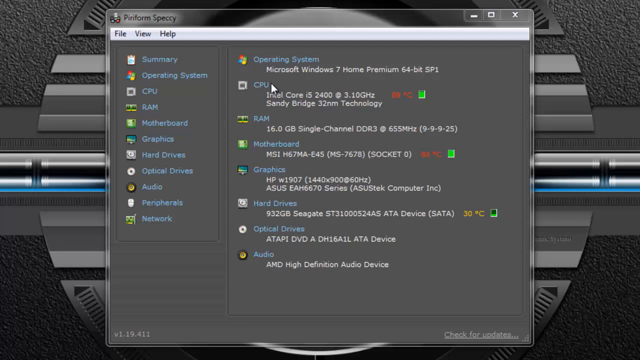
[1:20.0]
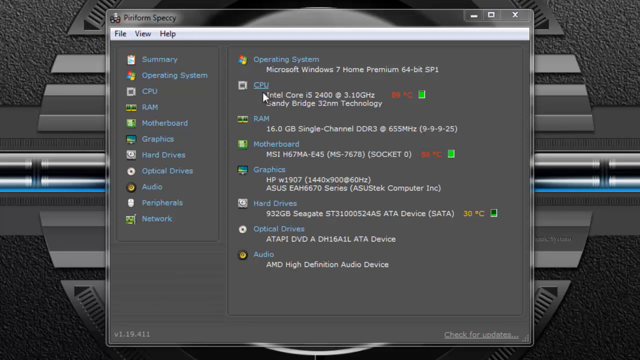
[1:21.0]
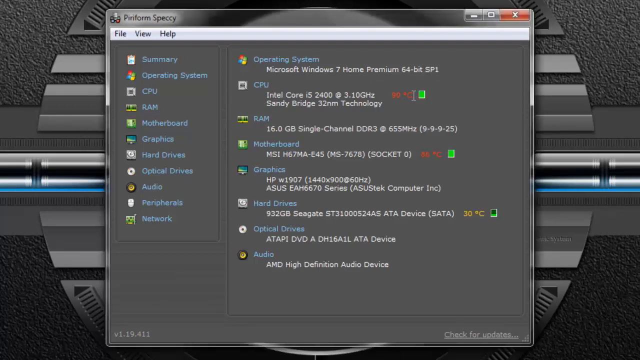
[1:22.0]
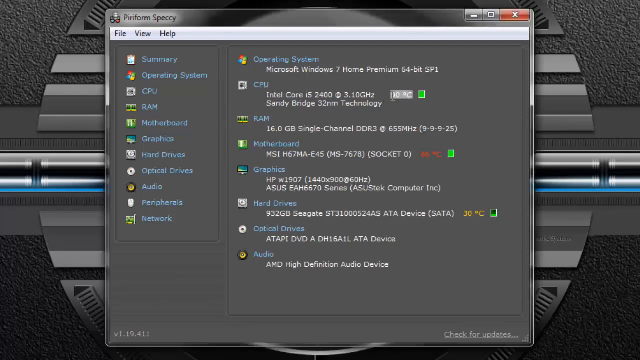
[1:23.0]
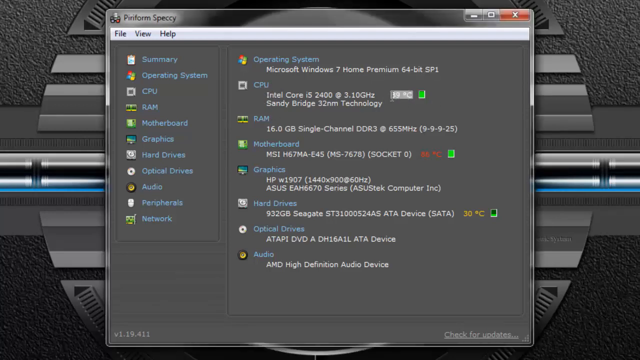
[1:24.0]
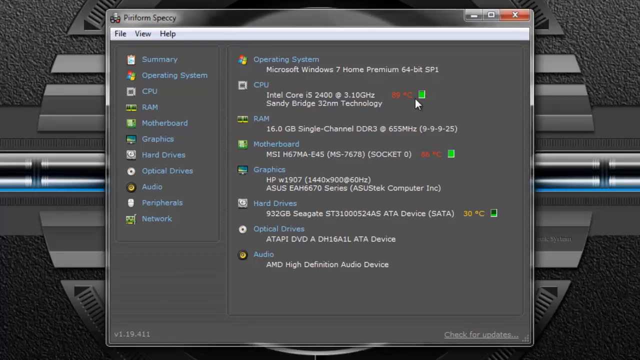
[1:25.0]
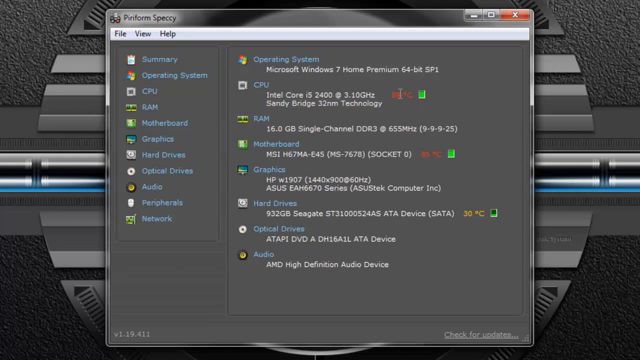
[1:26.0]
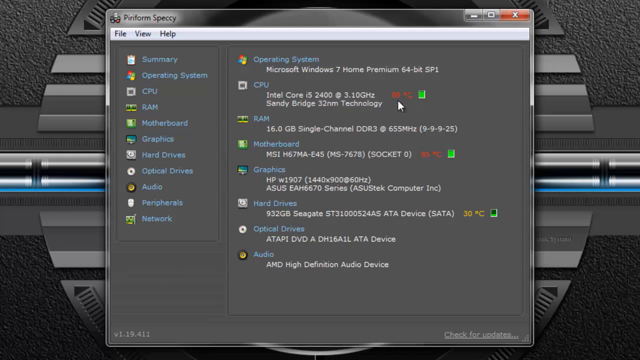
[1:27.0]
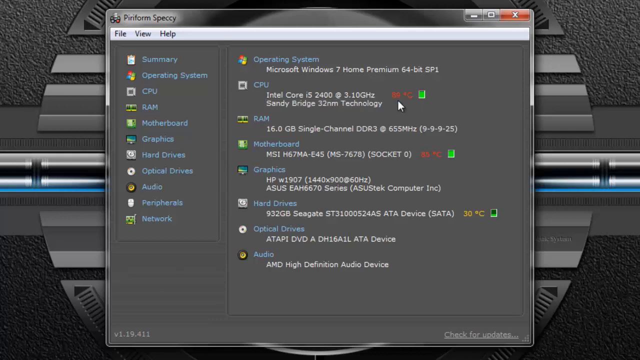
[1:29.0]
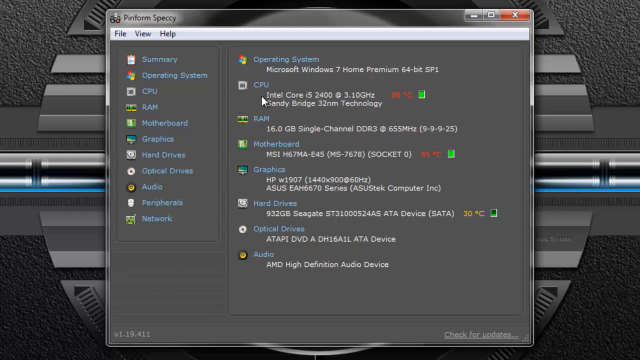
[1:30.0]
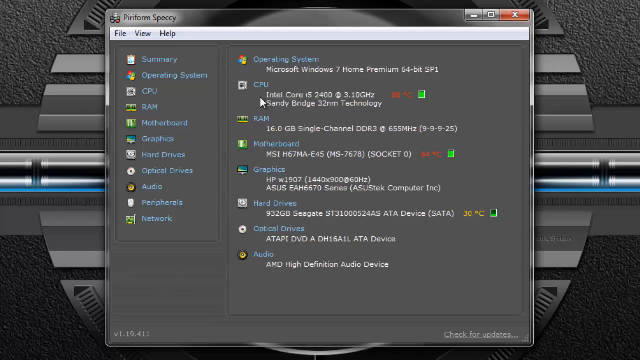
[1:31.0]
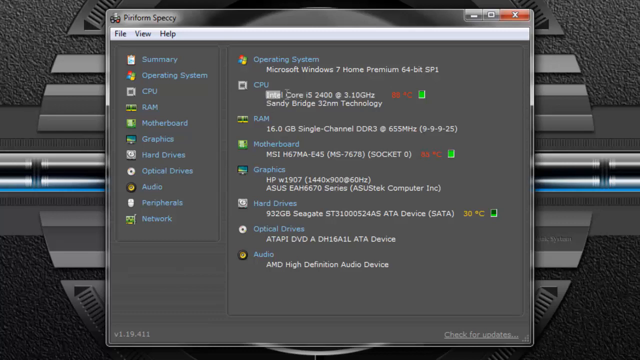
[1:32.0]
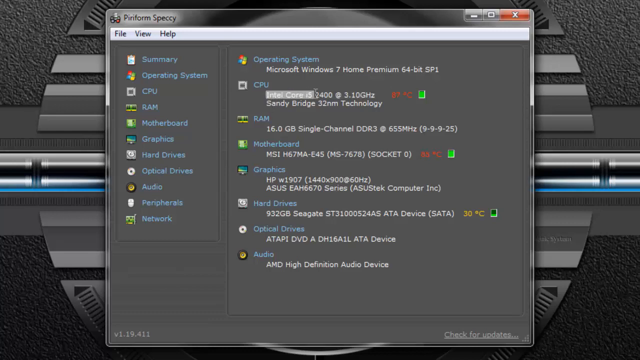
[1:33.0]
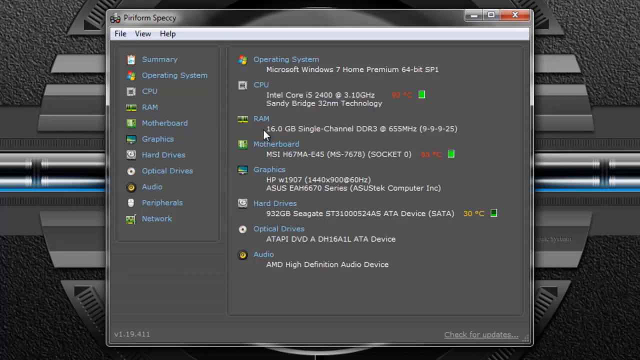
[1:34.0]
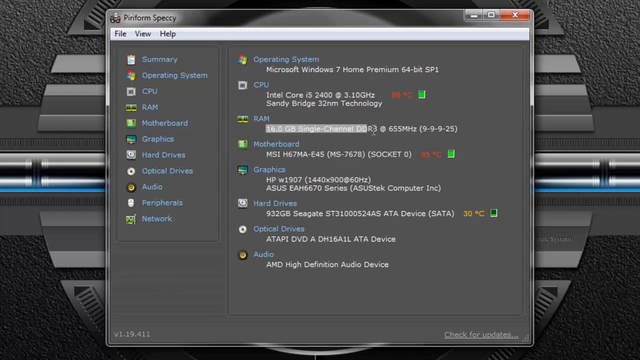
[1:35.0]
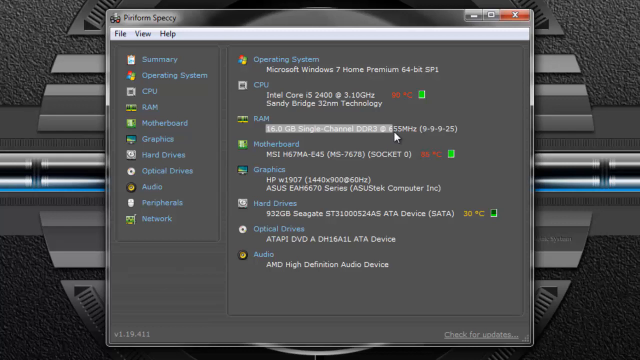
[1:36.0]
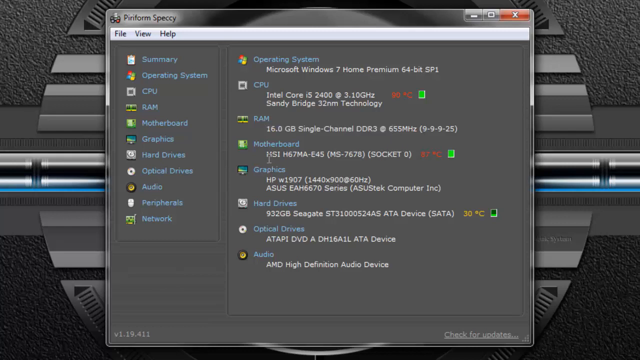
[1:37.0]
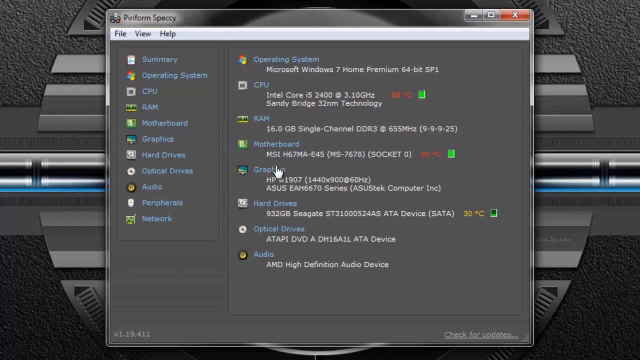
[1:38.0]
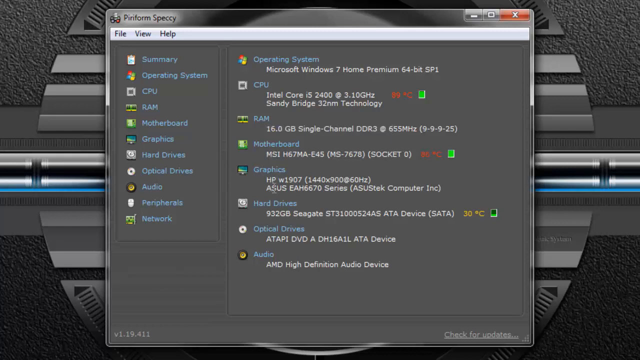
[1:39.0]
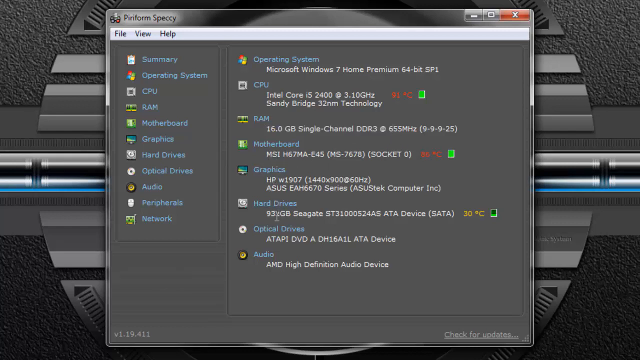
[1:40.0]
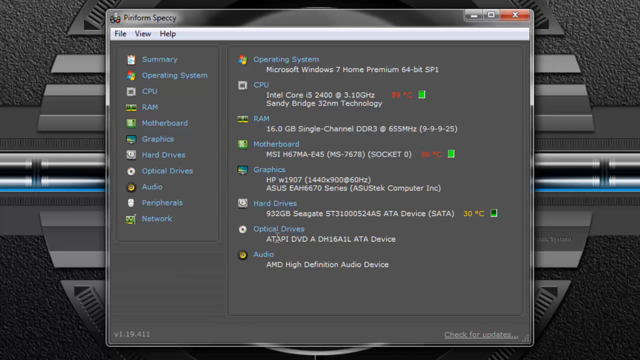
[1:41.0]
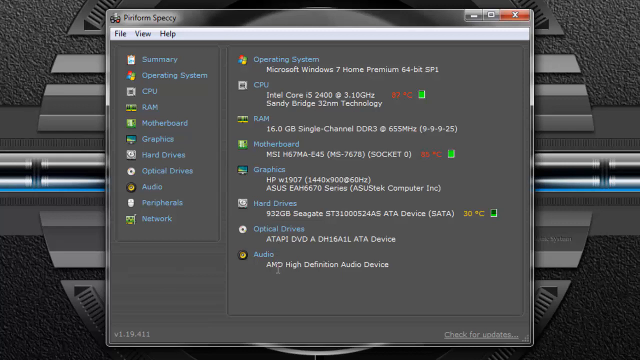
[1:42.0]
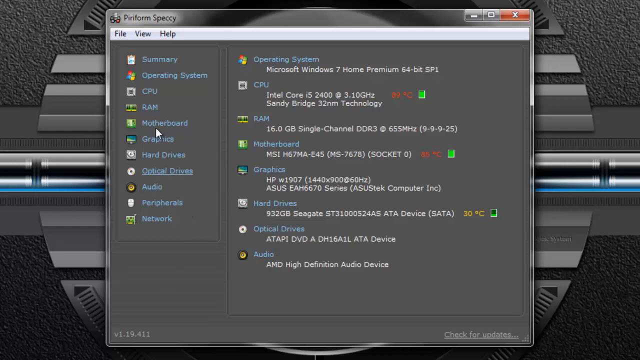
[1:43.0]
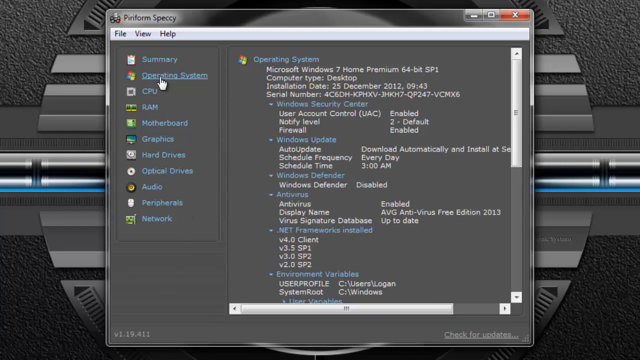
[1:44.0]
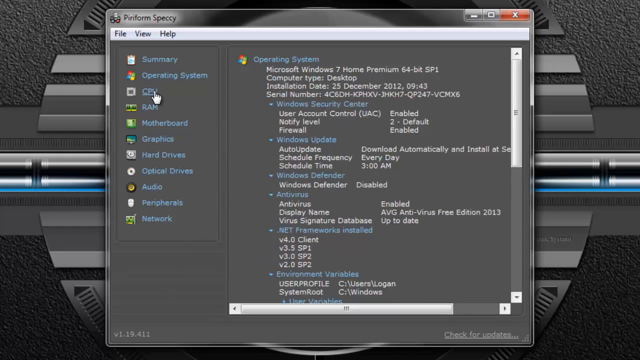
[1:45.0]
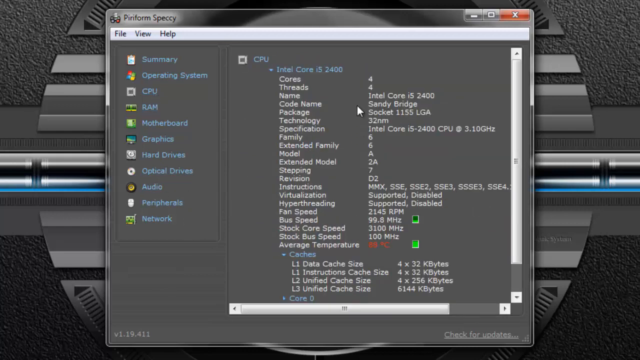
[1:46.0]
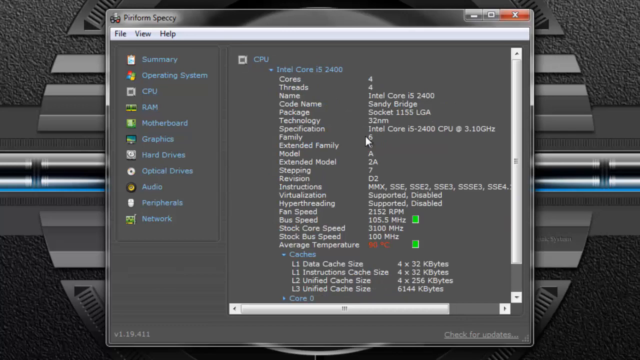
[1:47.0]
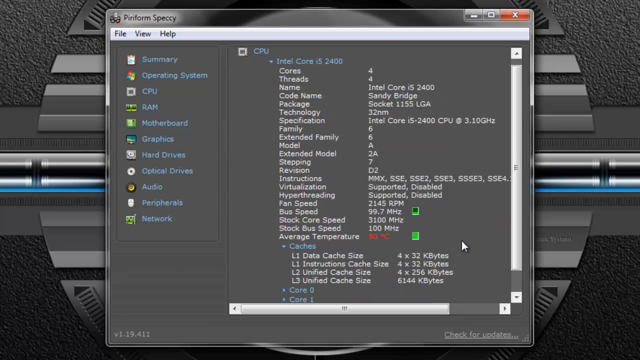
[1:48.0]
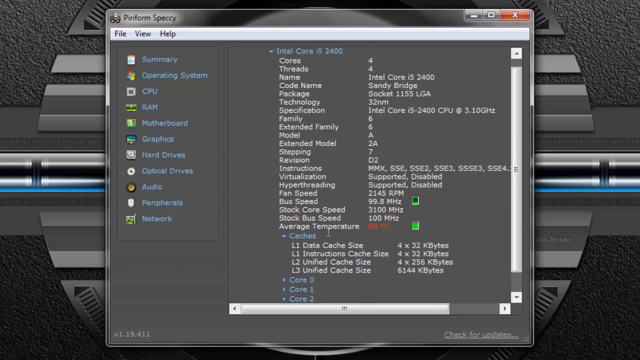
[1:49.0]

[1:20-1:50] Speccy has been opened and has run its analysis on the computer, and it now displays the results: operating system Windows 7 Home Premium; CPU Intel Core i5-2400 3.1 GHz; RAM 16 GB of single DDR3; motherboard MSI H67MA; graphics card HEW 1907 ASUS series; hard drive 932 GB SATA drive; optical drive TAPI DVD; and audio an AMD high def audio device. Some information, such as the CPU, is in red, possibly indicating an issue, and there is a green box next to it. The user highlights what is in red. The motherboard is also in red at a certain percentage, but he does nothing with that. He highlights the CPU and the Intel Core processor, and also the 16 GB of RAM, and nothing else. Then he clicks on the operating system, which shows information about it. He then clicks on CPU, which gives a drill-down of CPU usage, and the average temperature looks higher than it should be.